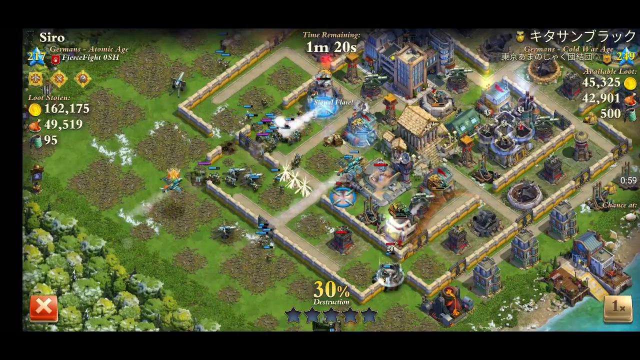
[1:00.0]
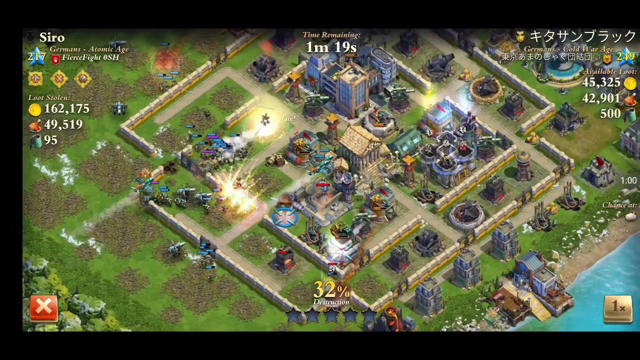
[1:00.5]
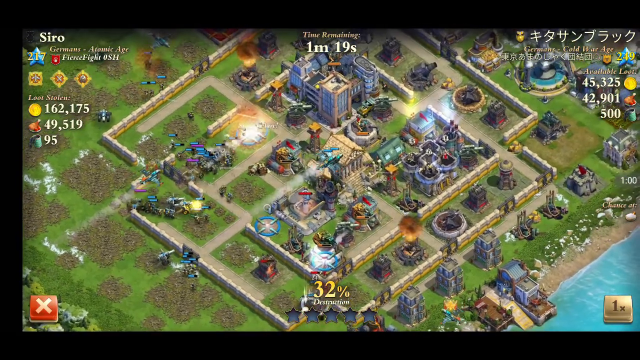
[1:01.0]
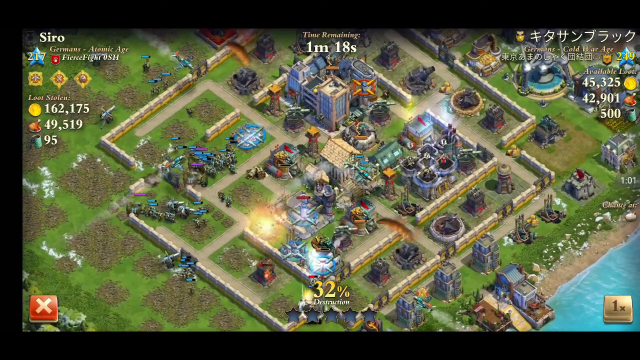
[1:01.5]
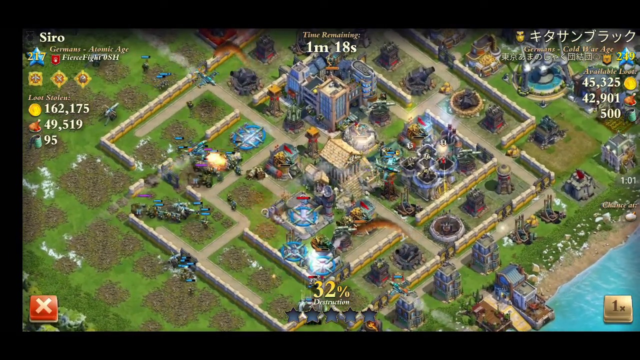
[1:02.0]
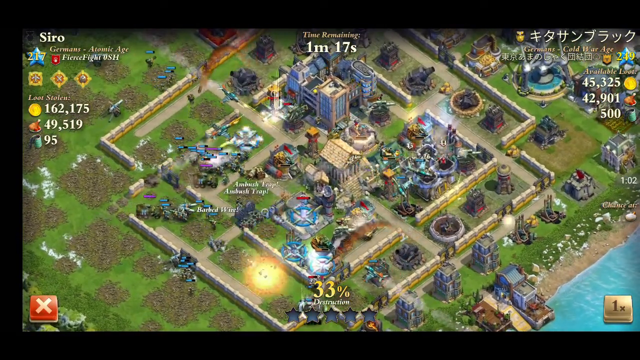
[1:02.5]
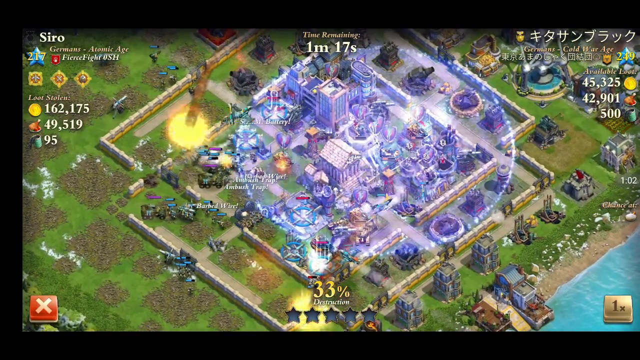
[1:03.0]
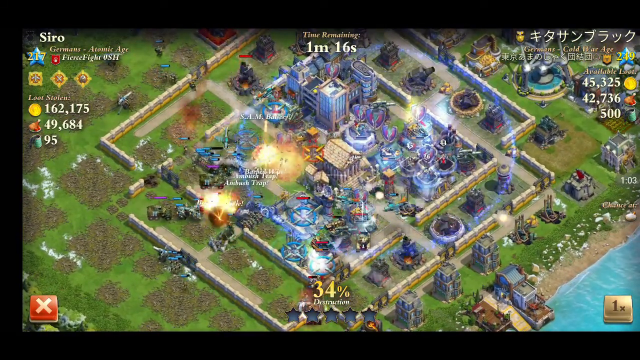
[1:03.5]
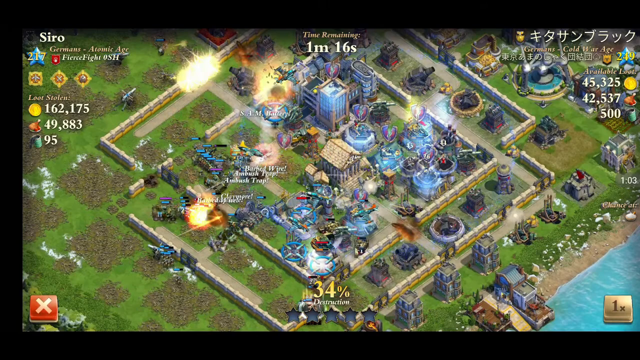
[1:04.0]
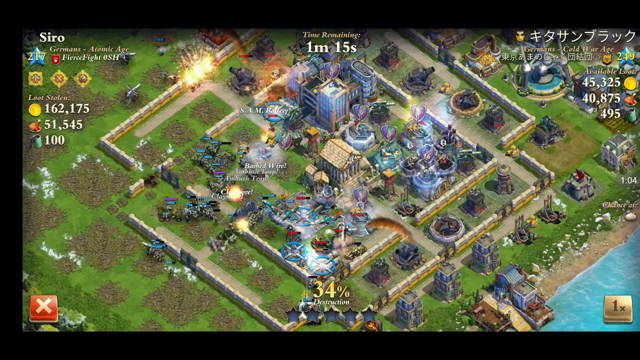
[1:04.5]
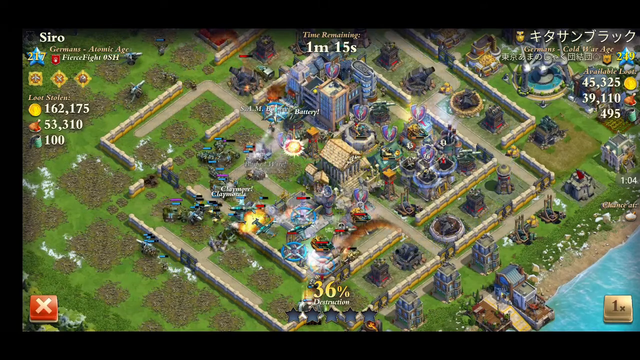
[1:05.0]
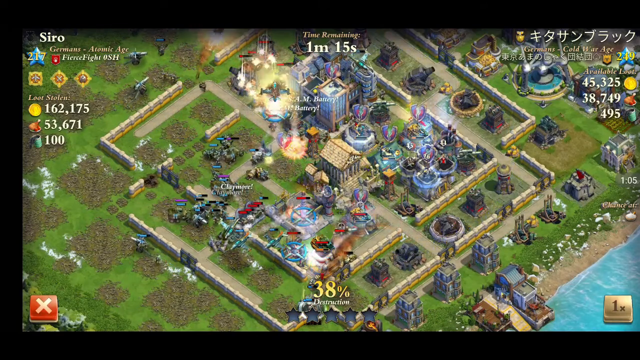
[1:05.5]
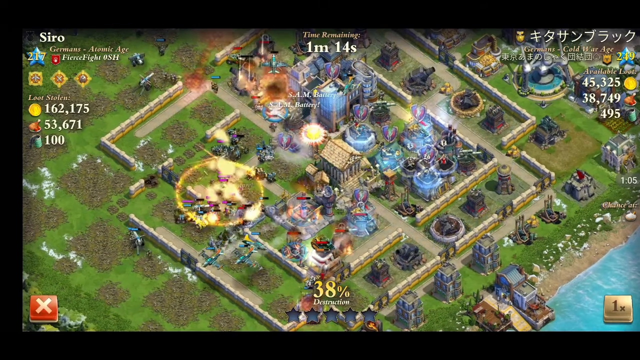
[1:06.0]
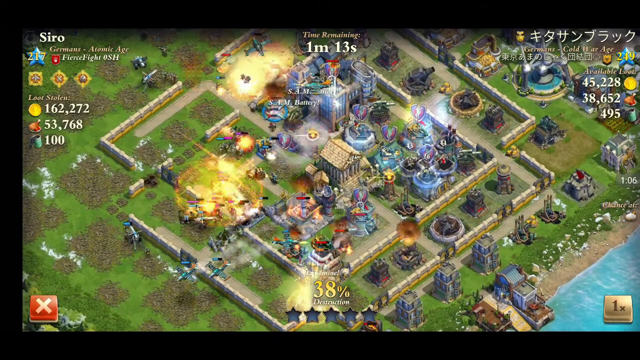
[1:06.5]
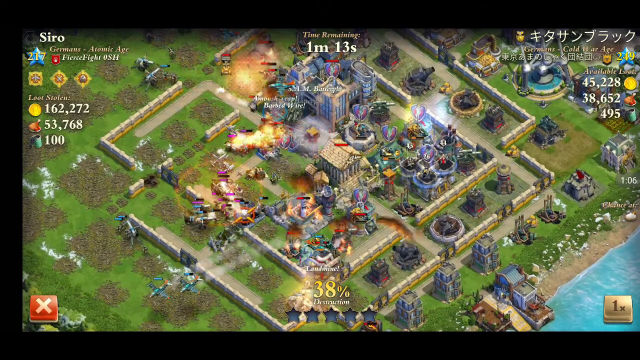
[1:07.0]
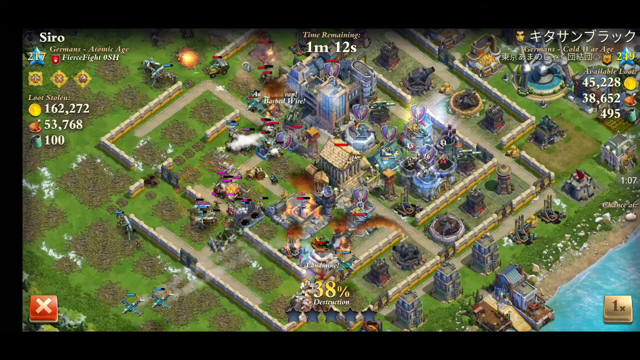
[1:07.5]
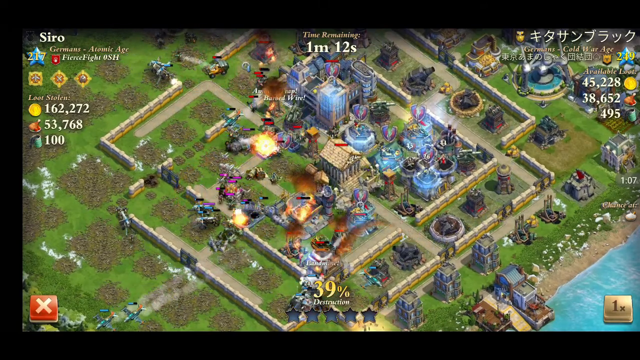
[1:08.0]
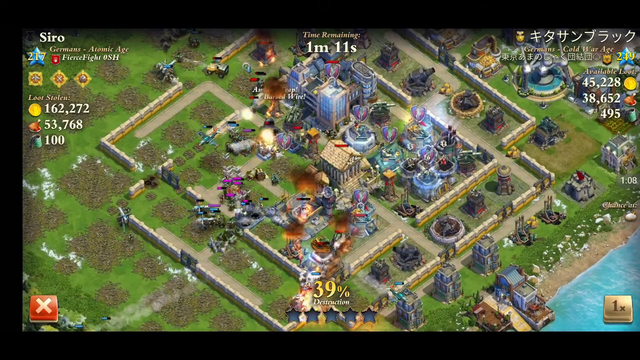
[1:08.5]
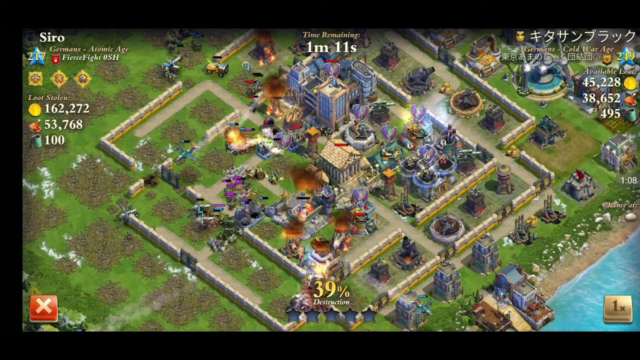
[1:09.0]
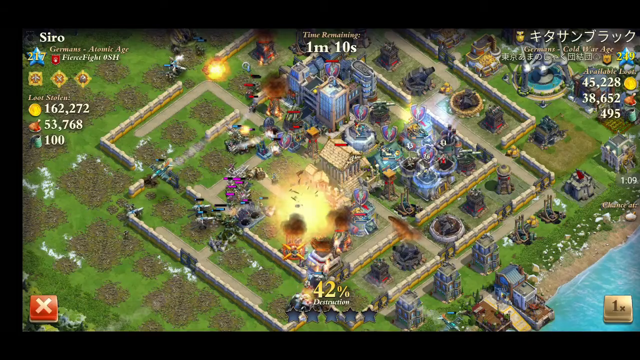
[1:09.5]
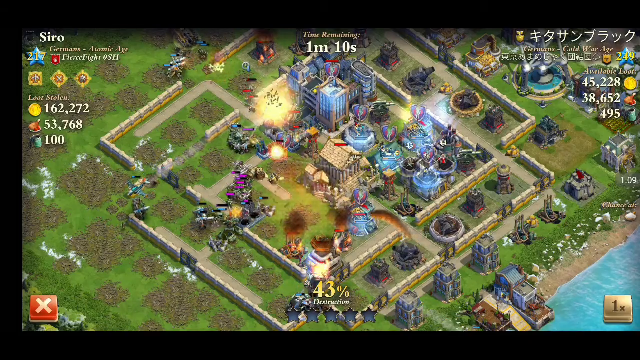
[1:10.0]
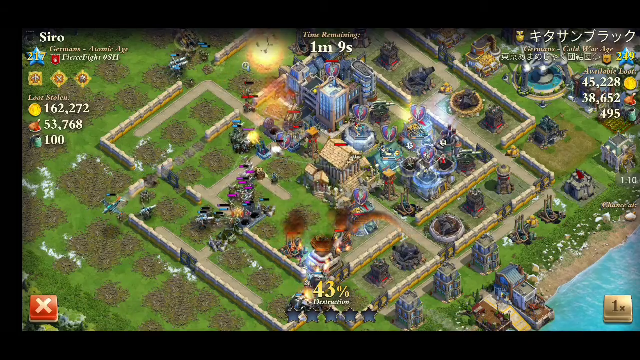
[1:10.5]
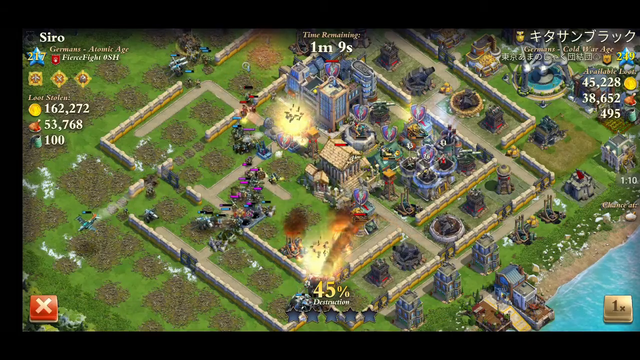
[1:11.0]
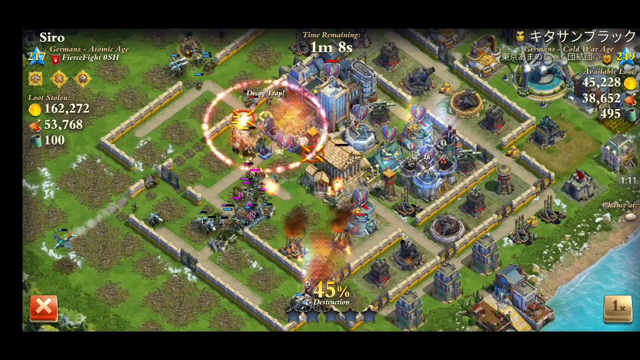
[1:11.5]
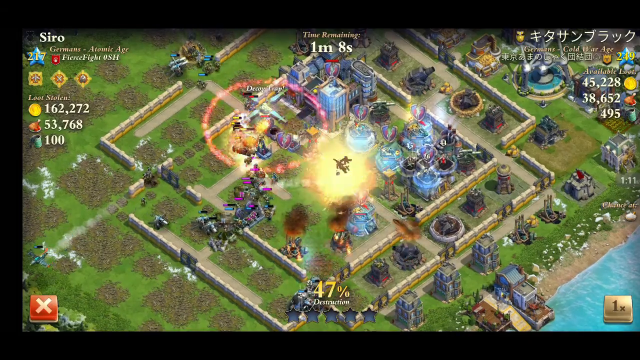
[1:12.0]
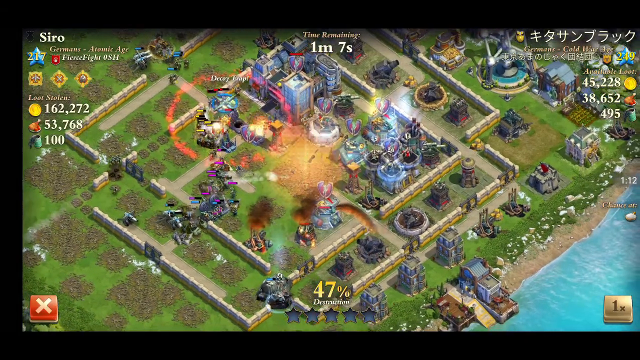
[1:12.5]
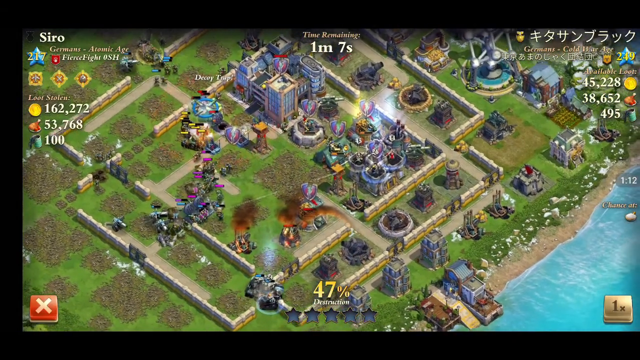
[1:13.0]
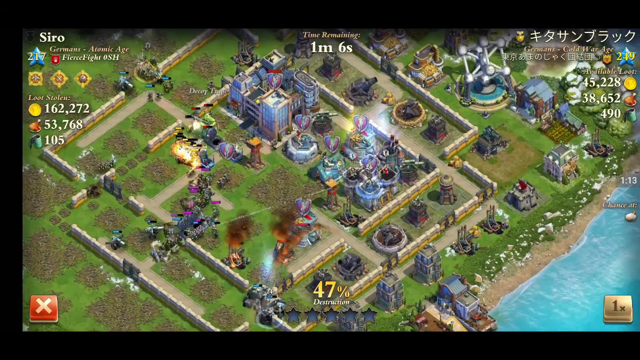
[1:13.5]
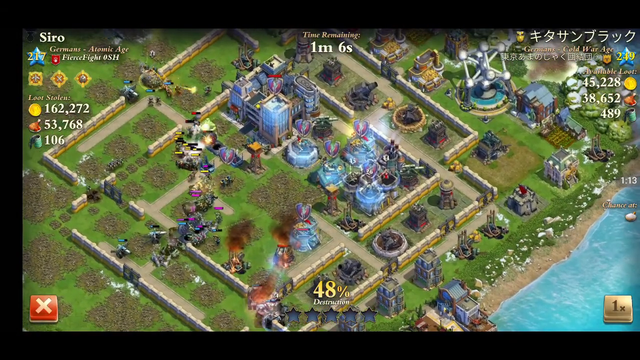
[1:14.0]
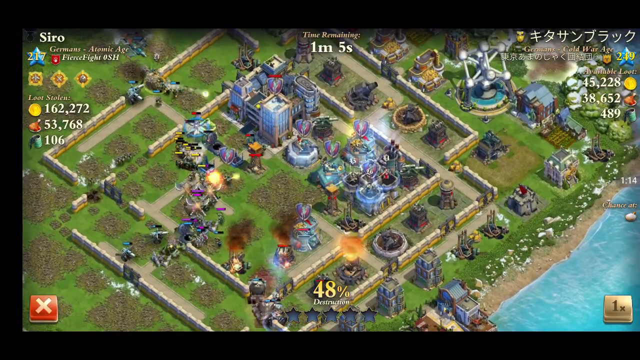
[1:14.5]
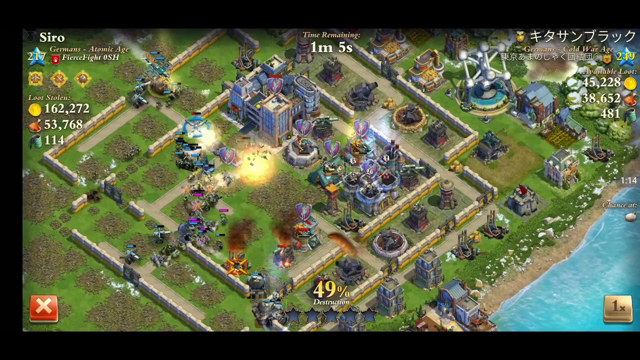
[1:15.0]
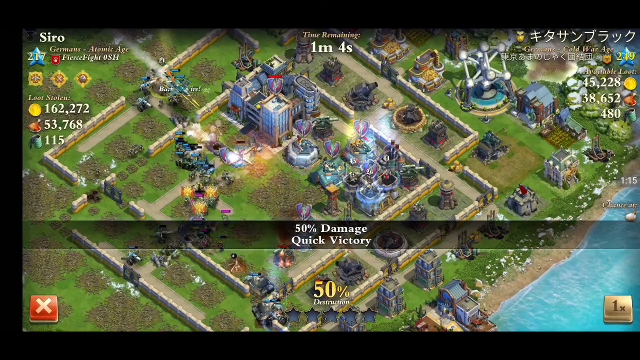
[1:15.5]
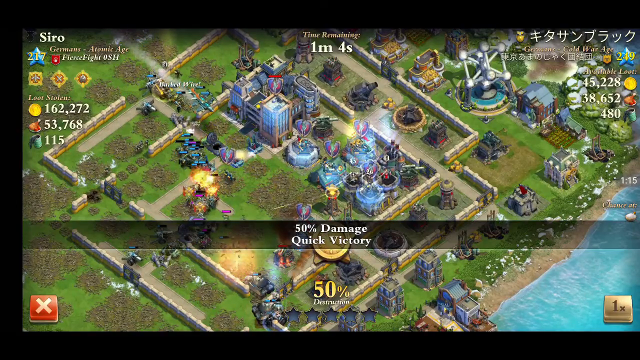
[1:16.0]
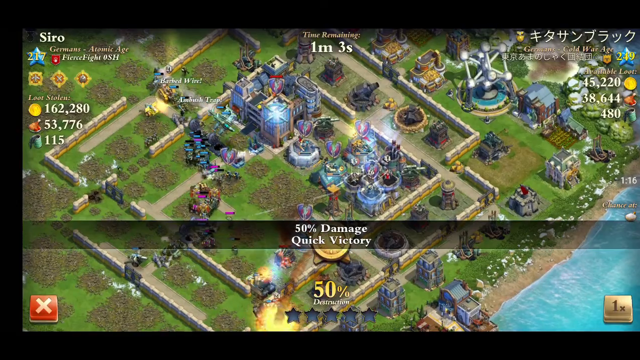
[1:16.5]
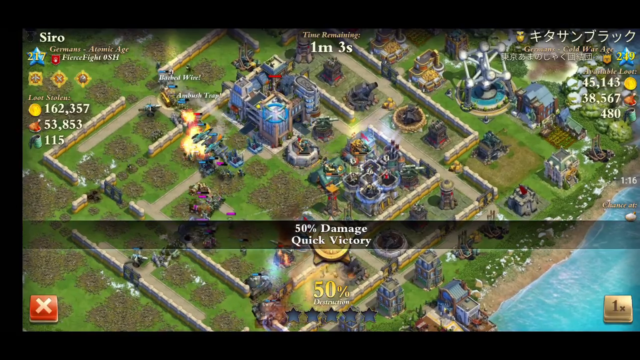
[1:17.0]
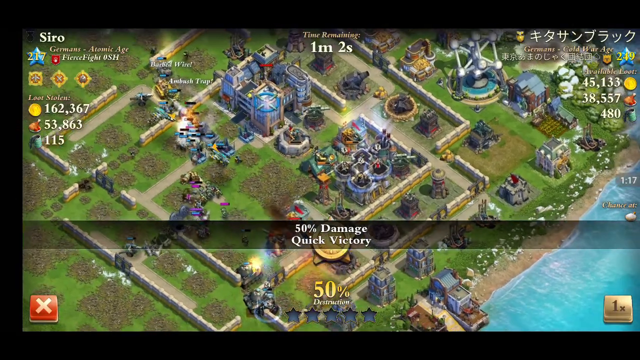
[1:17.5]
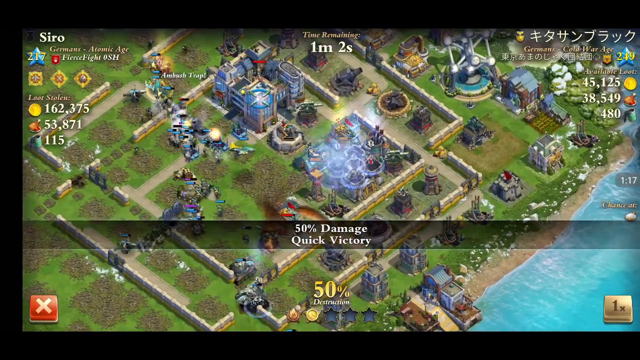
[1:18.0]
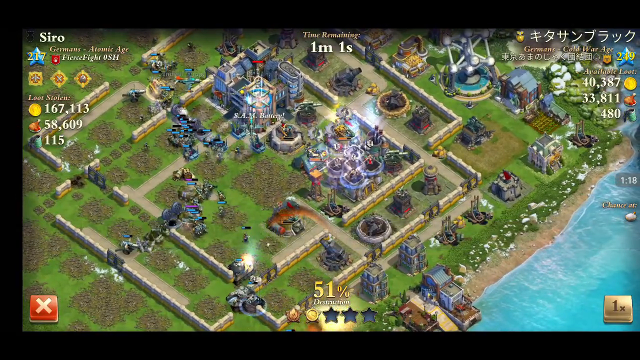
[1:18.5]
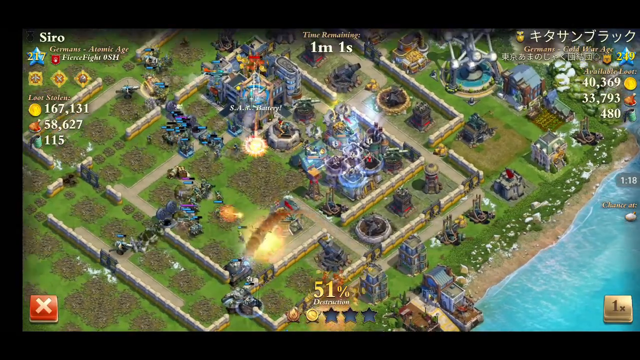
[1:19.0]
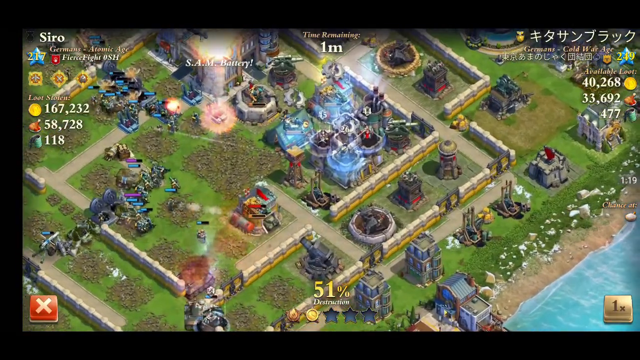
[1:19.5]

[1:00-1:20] The attack keeps going the same way, with the attacking player succeeding. A pretty big area of effect damage hits many of the buildings, though the replay does not show where it came from. The available loot still left to plunder from the defender is shown, and the attacking player appears to have already stolen most of it. The defending player is not putting up much of a fight. By the end of this section the game shows 50% destruction and seems to award the attacking player a medal. A star rating appears at the bottom. Half of the settlement has been wiped out within about the first minute, with a minute left.